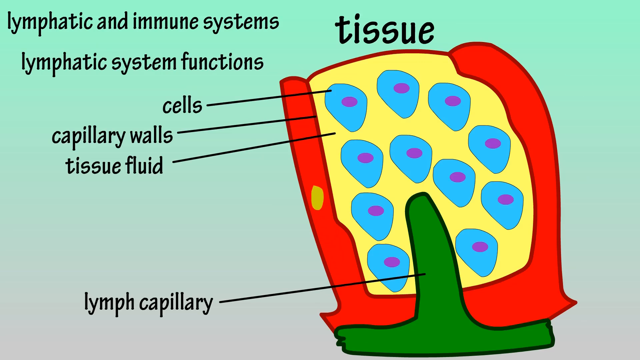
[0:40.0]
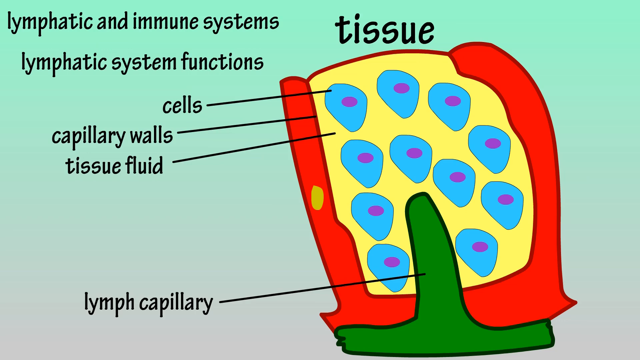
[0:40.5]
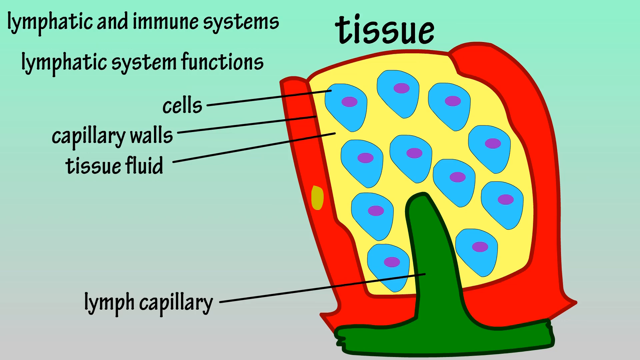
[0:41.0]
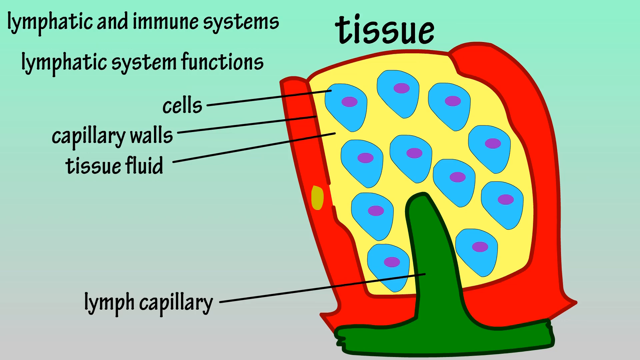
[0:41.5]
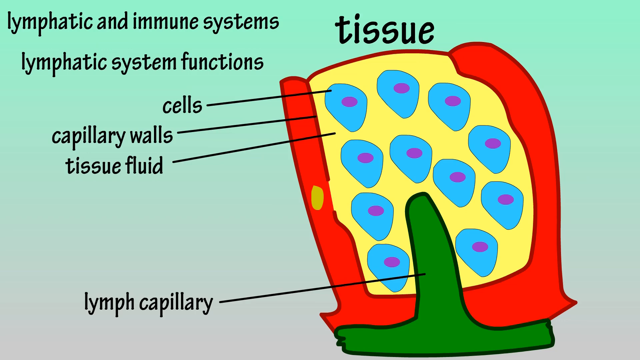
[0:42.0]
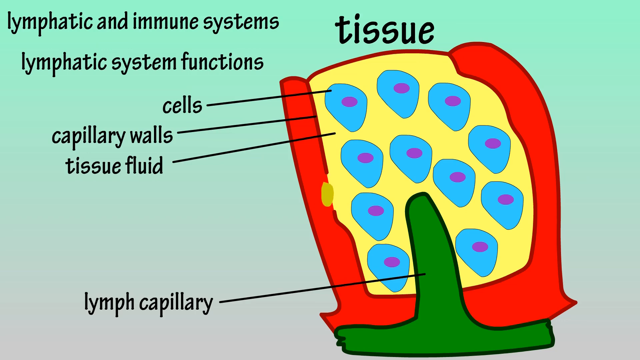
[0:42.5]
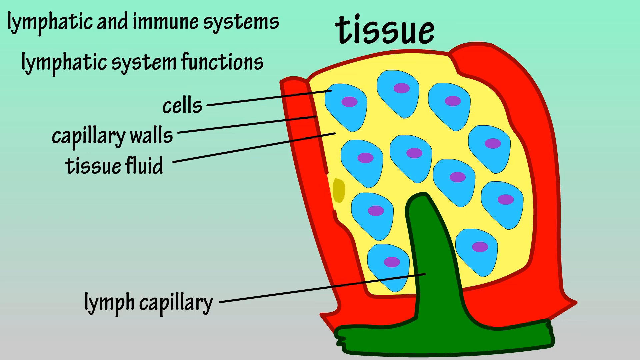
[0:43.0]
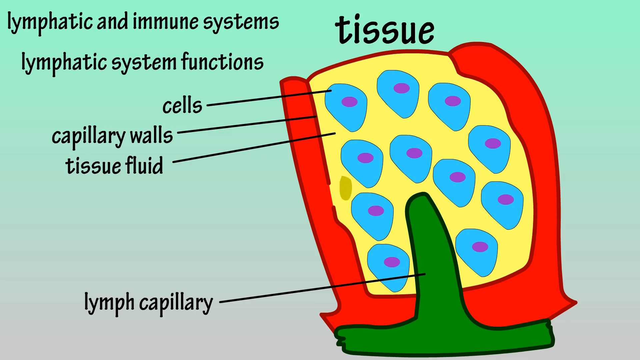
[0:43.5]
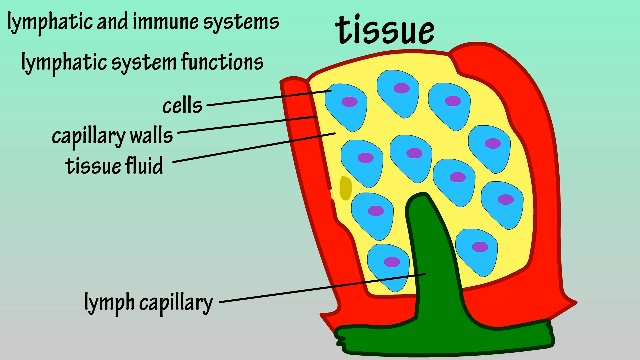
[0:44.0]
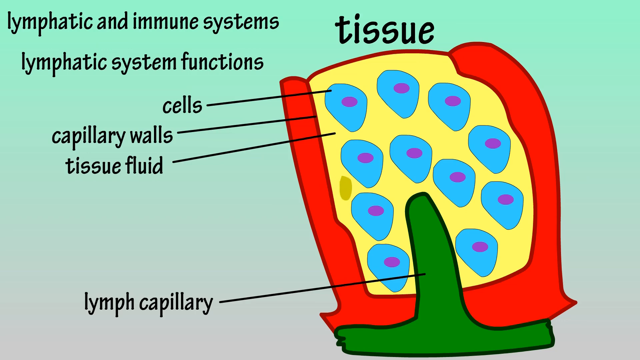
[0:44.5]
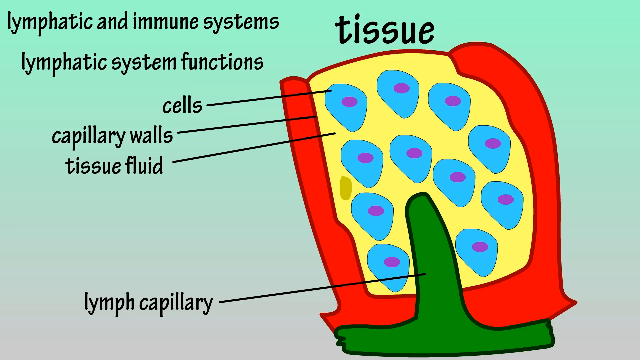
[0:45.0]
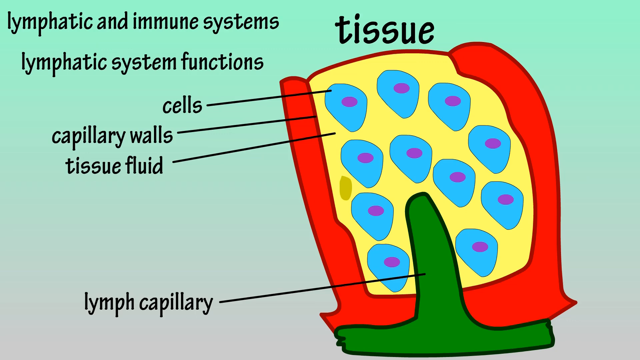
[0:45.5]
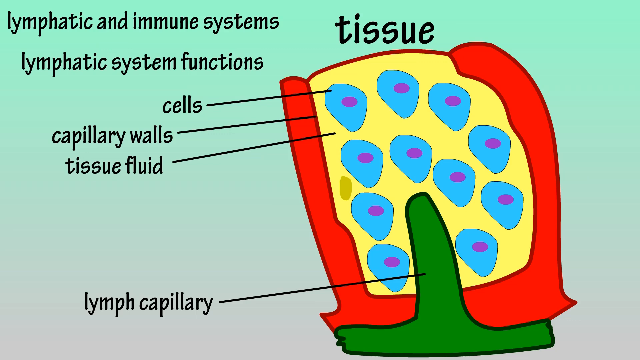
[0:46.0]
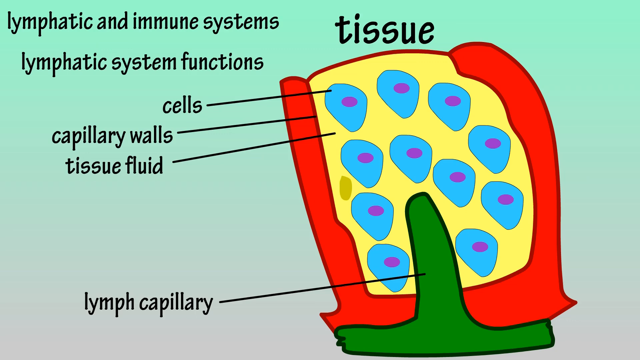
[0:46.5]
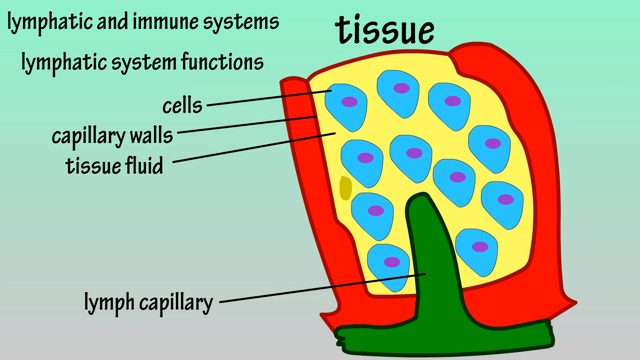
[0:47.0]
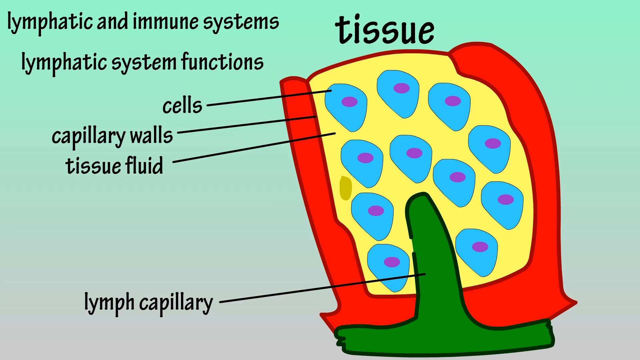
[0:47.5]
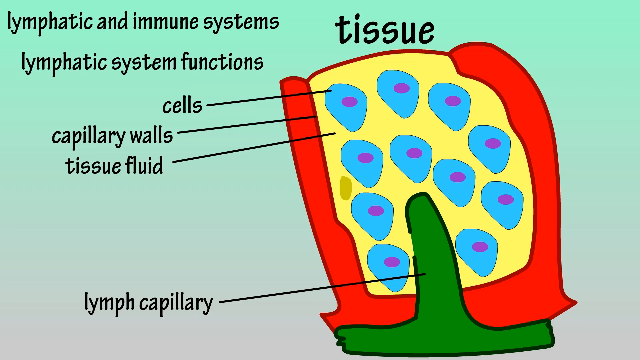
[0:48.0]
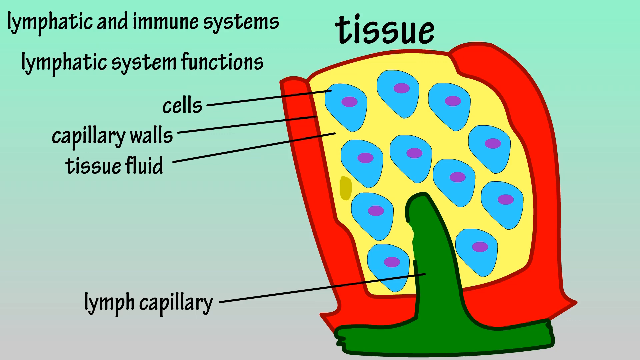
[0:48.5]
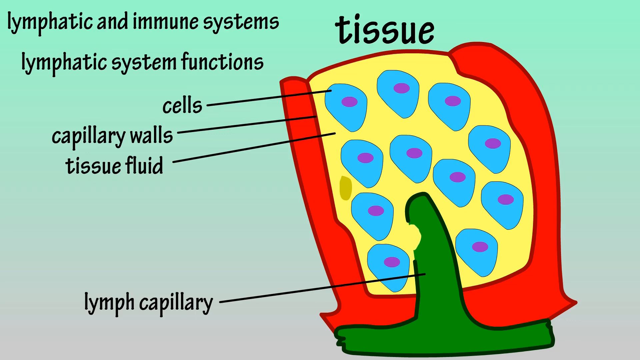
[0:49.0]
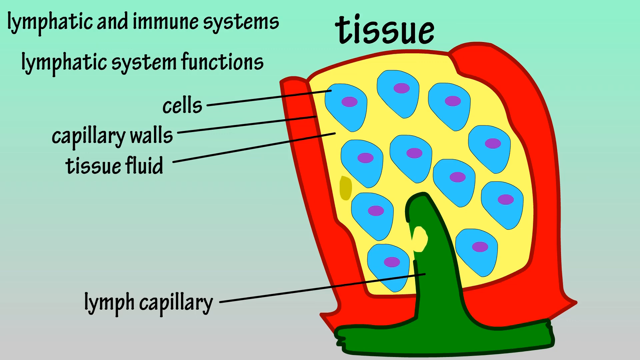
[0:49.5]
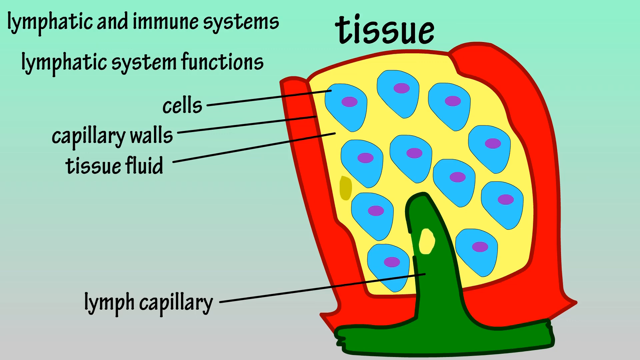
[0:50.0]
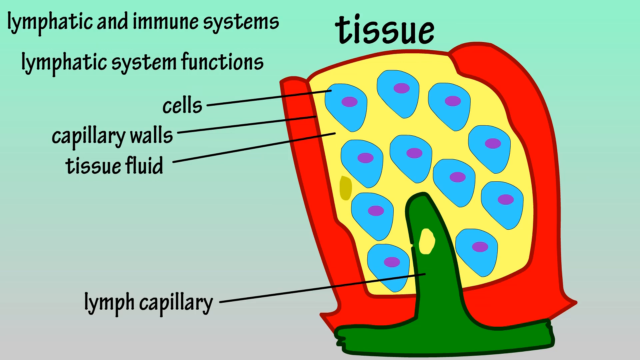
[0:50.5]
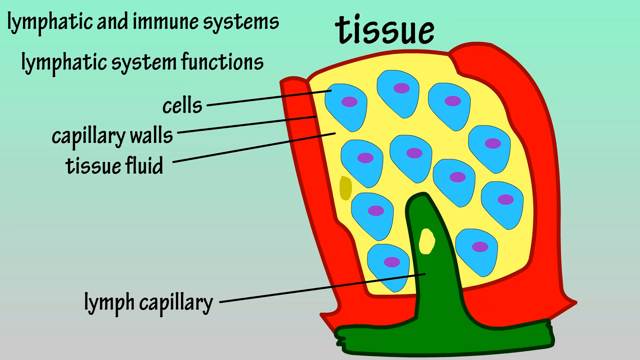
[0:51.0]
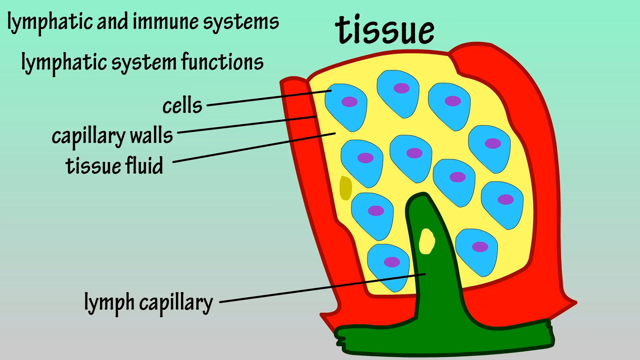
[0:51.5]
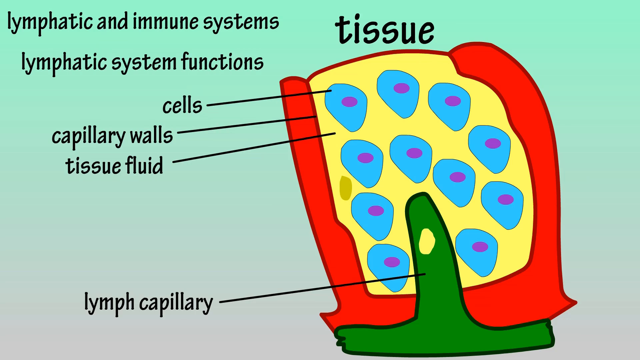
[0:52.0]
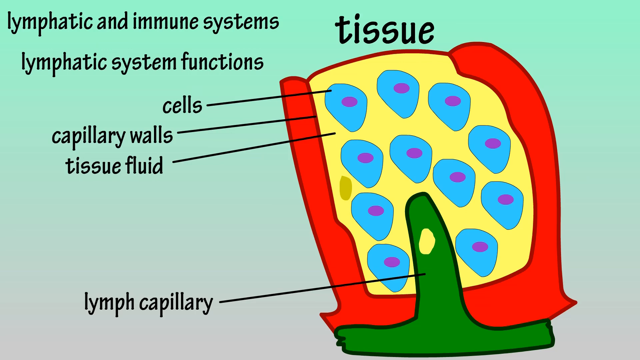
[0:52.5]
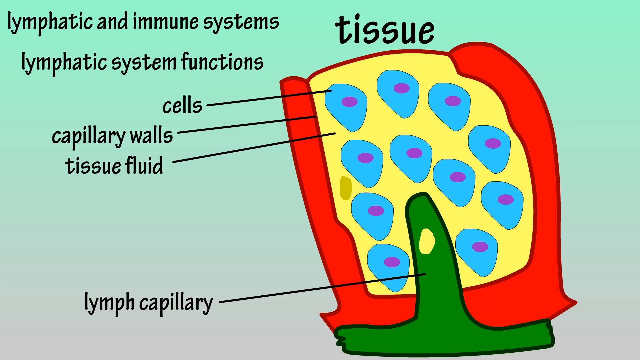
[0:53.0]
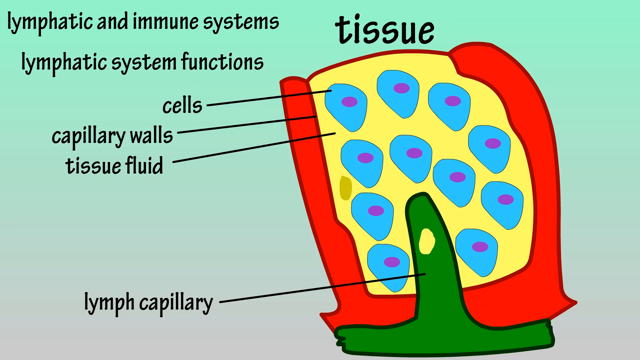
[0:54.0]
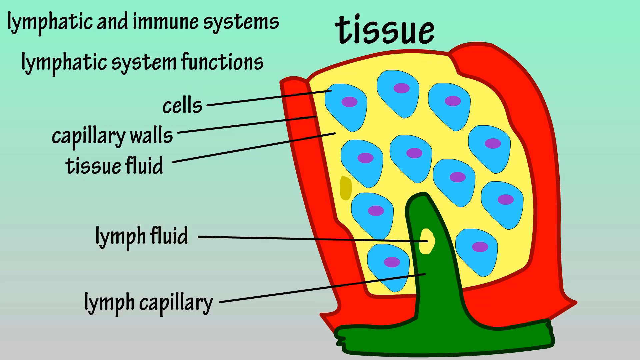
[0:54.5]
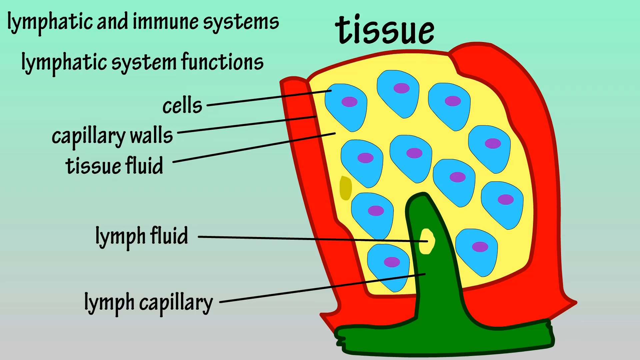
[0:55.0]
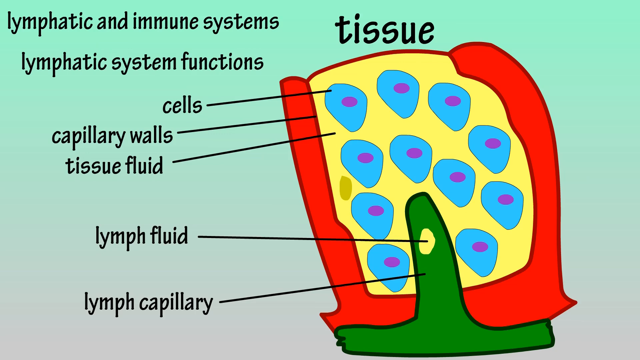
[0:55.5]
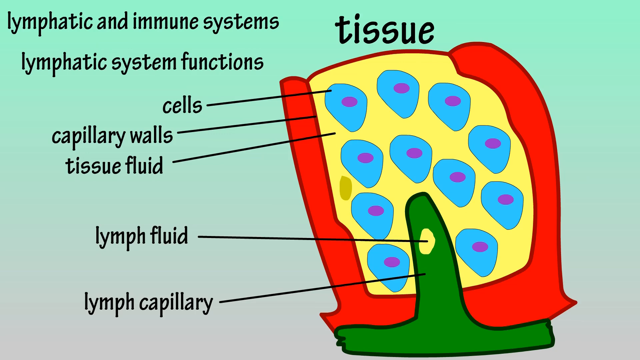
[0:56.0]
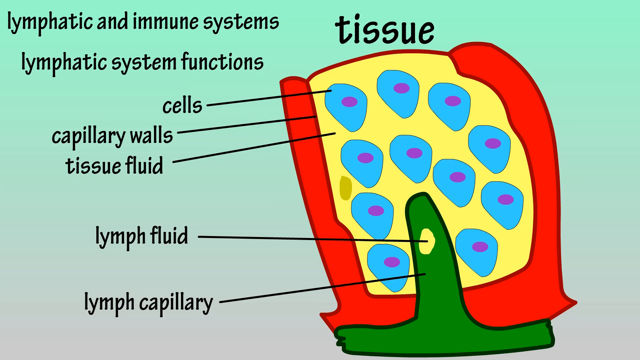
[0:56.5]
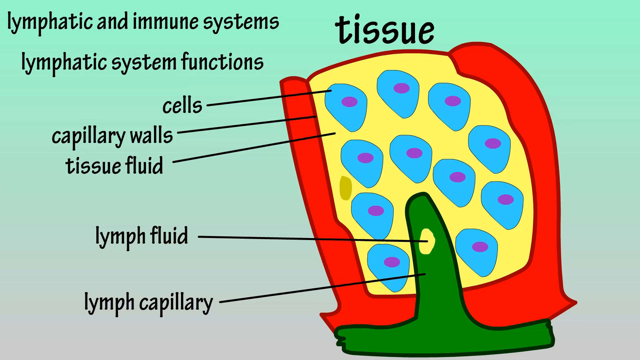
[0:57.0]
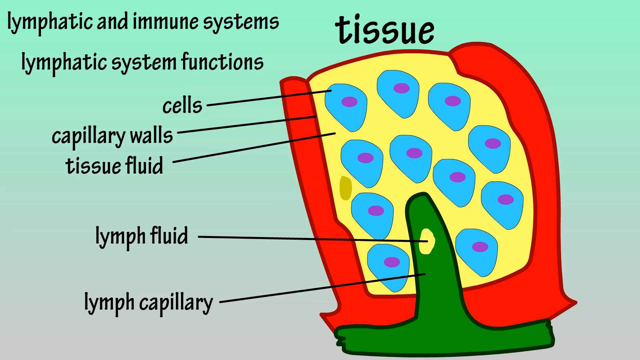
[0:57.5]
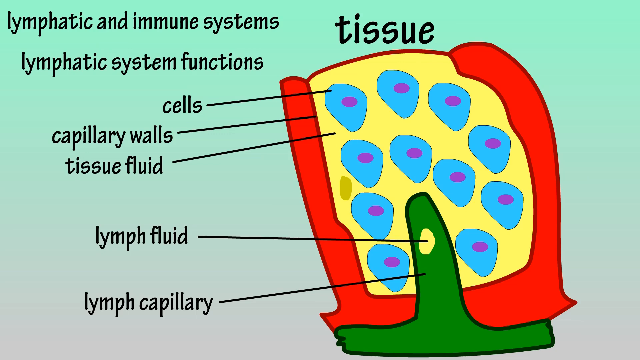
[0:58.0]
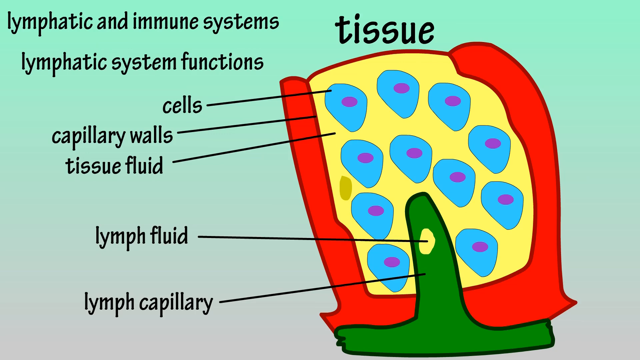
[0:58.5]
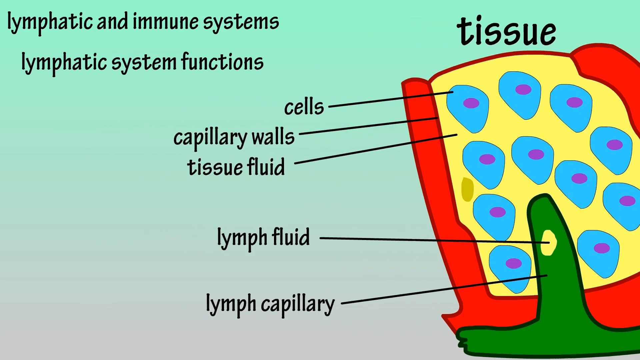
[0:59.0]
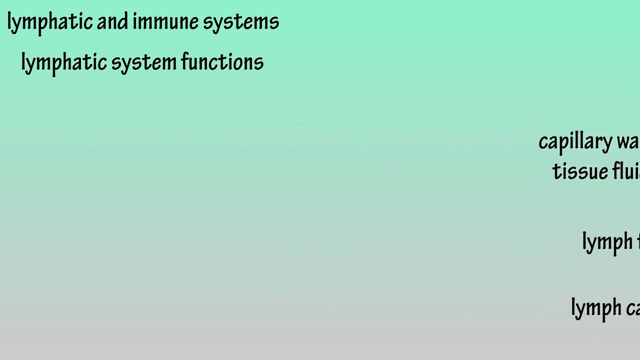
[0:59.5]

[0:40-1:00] The same tissue is shown, with the two texts "lymphatic and immune systems" and "lymphatic system functions" in the top left corner. In the middle of the scene is the tissue with blue cells, each with a purple dot inside. Capillary walls go around the cells, tissue fluid fills the yellow space between all the cells, and at the bottom of the tissue a lymph capillary that looks kind of like a hat goes into the tissue fluid. A small, oval, yellowish thing passes through the capillary walls toward the tissue fluid, and the same thing goes into the top of the lymph capillary; it is called lymph fluid. At the end of the scene, the tissue disappears.